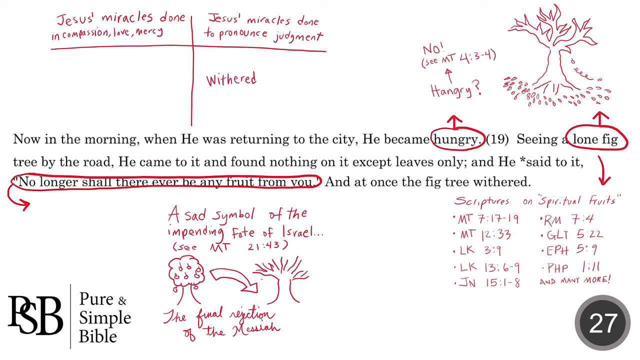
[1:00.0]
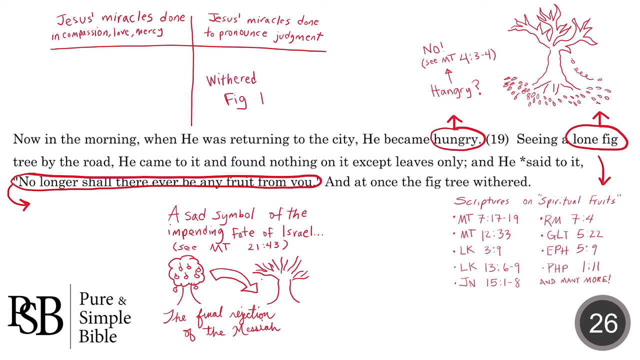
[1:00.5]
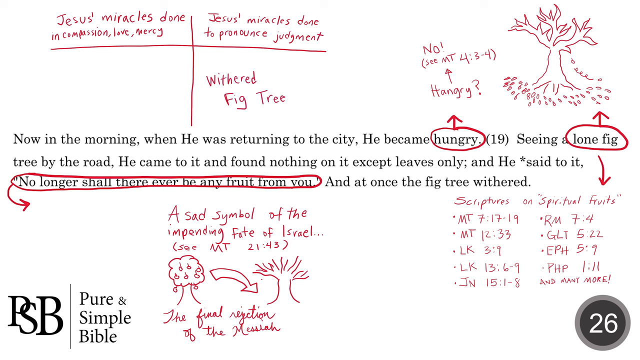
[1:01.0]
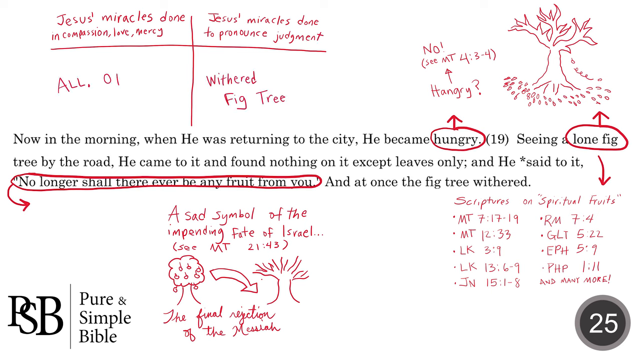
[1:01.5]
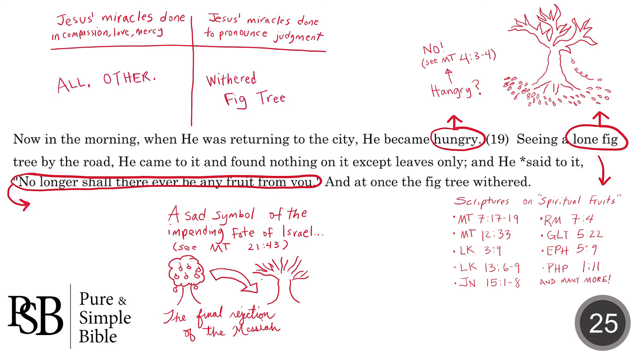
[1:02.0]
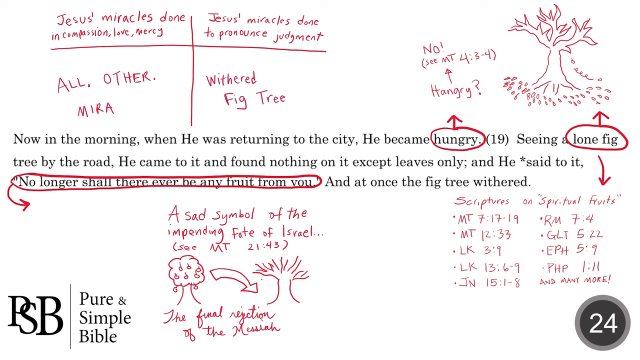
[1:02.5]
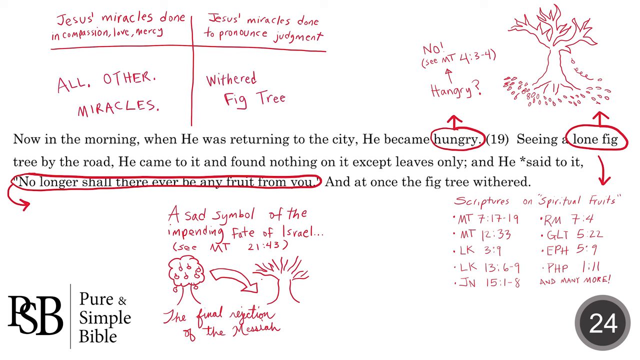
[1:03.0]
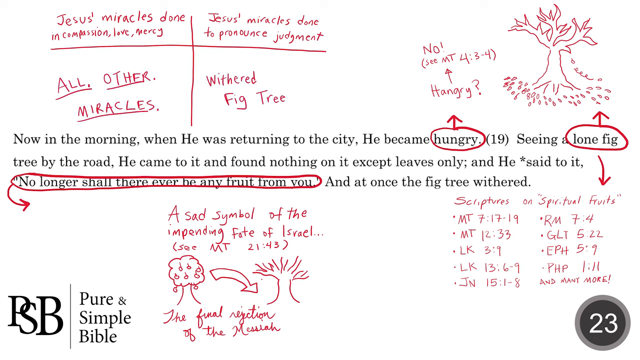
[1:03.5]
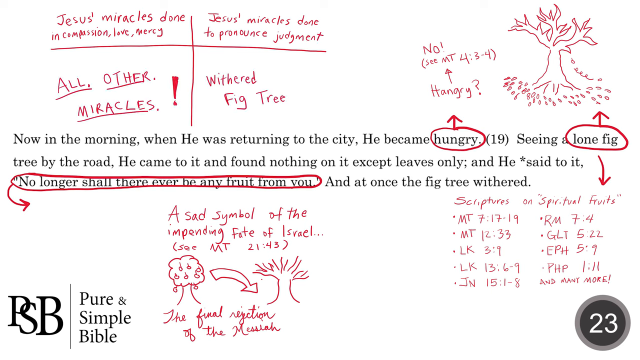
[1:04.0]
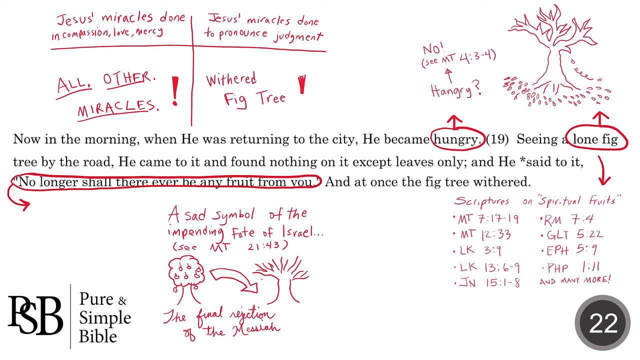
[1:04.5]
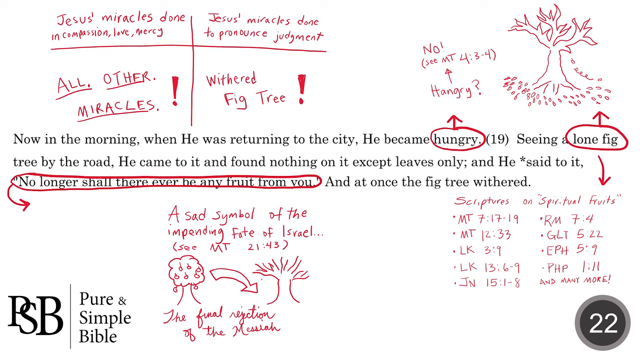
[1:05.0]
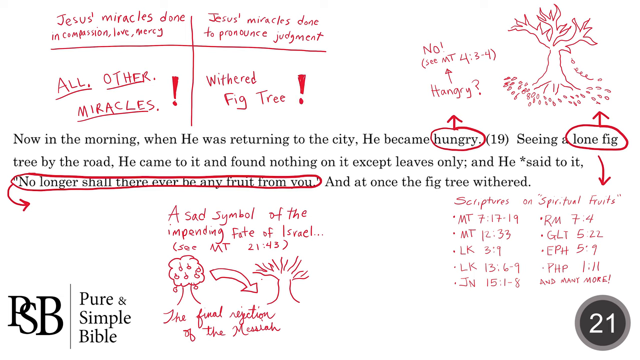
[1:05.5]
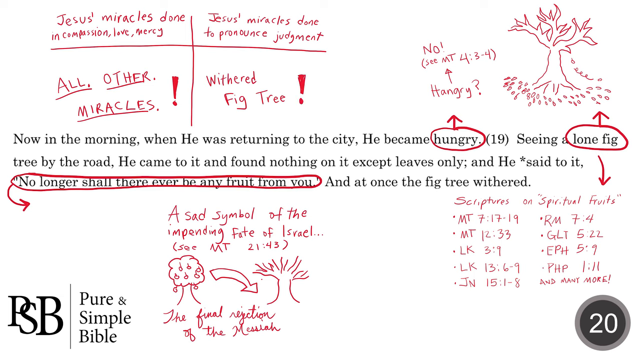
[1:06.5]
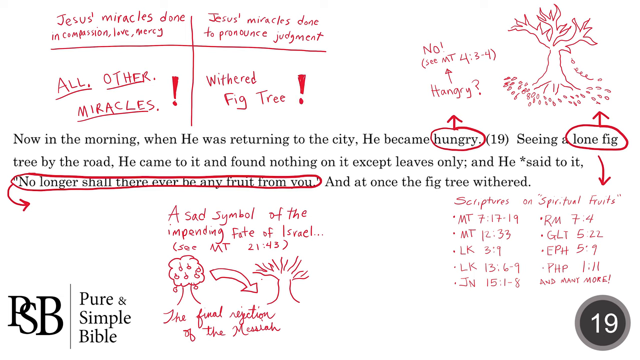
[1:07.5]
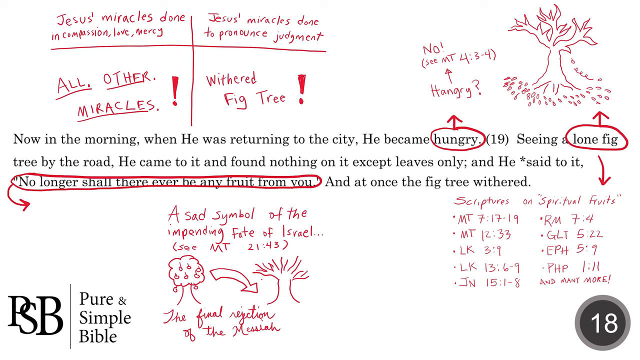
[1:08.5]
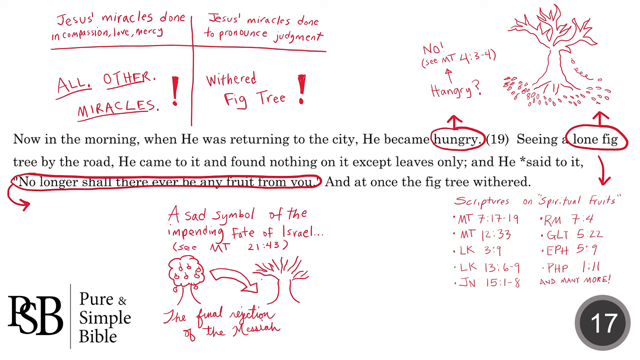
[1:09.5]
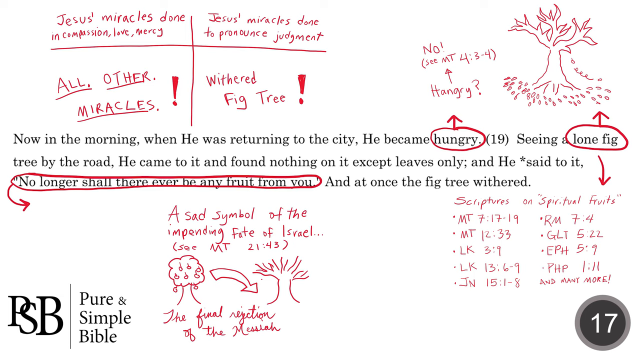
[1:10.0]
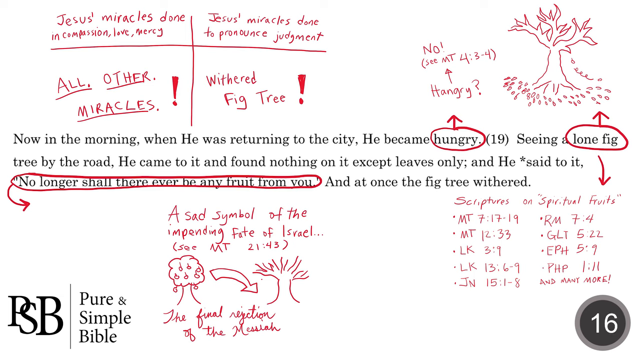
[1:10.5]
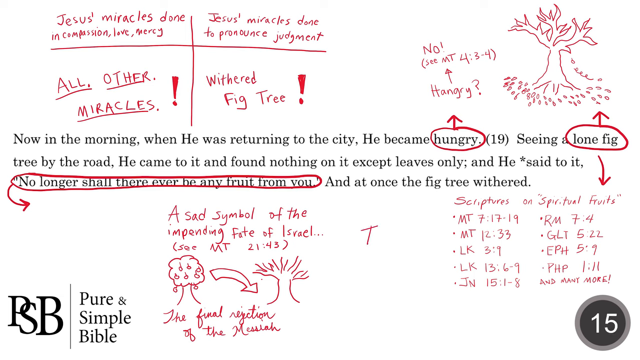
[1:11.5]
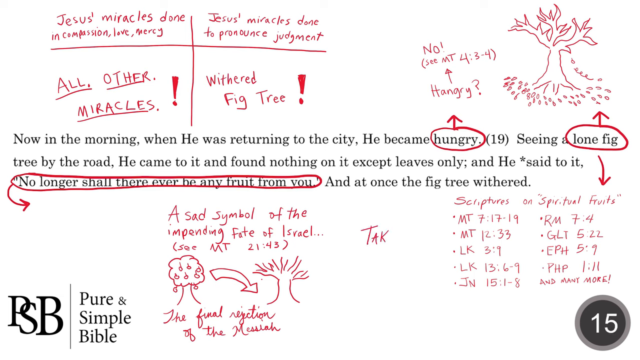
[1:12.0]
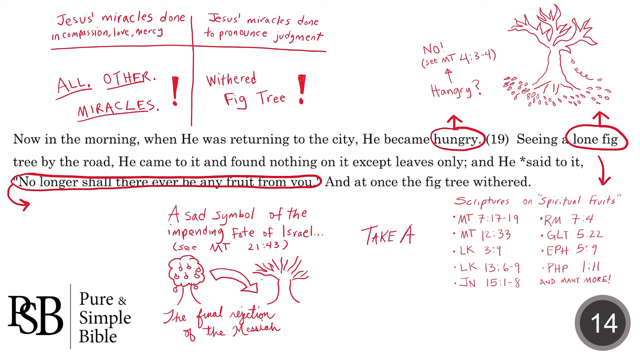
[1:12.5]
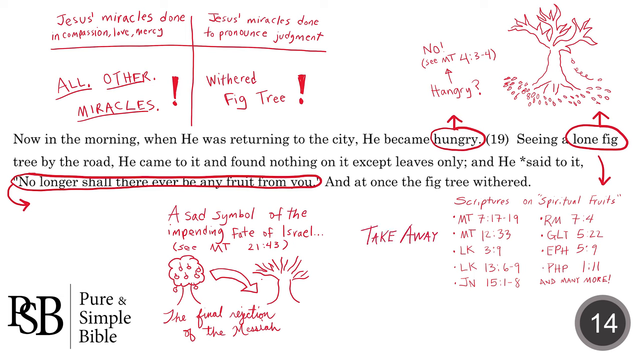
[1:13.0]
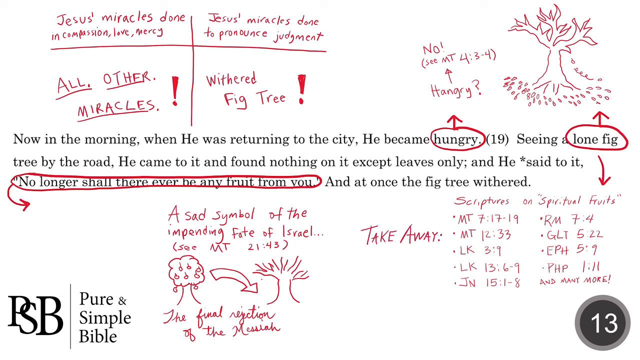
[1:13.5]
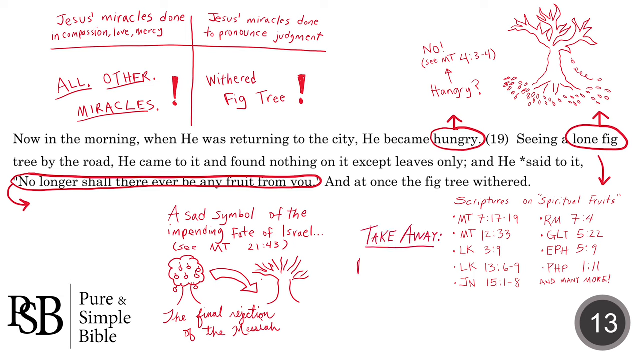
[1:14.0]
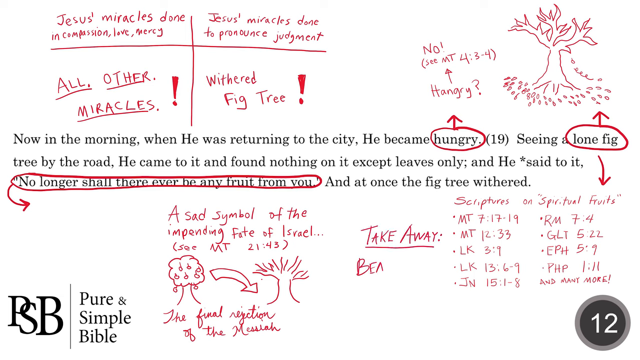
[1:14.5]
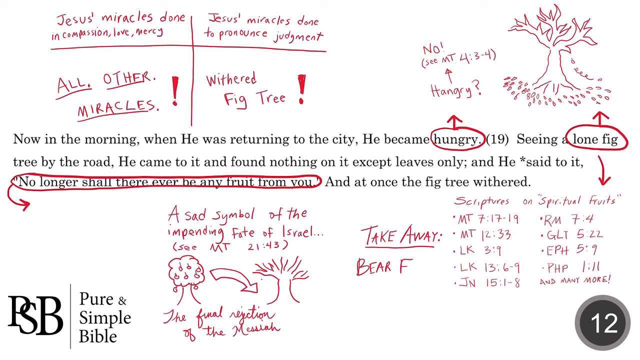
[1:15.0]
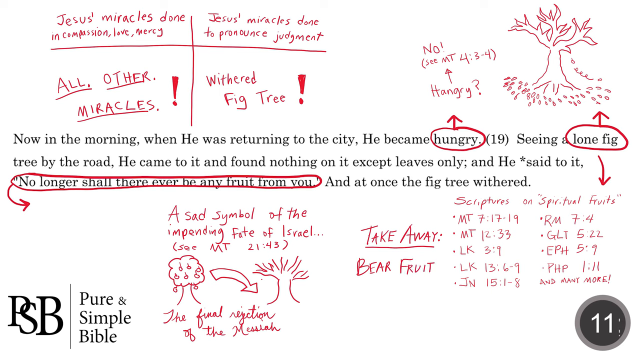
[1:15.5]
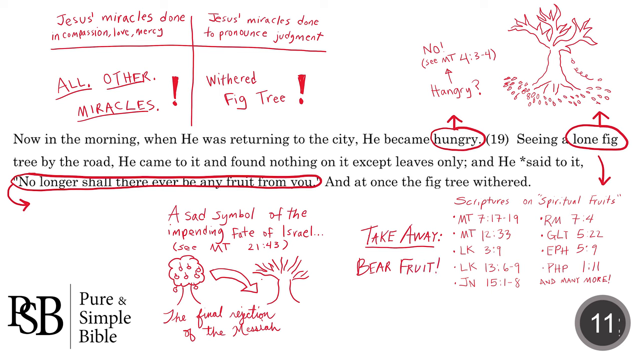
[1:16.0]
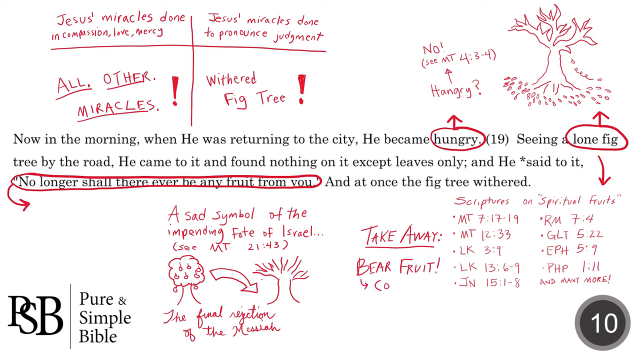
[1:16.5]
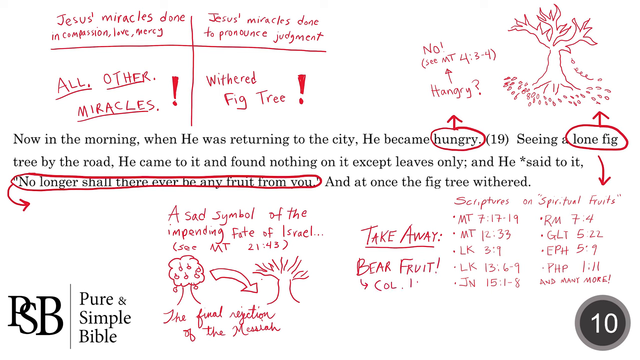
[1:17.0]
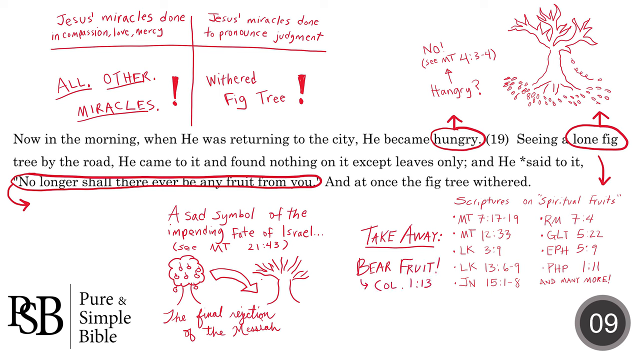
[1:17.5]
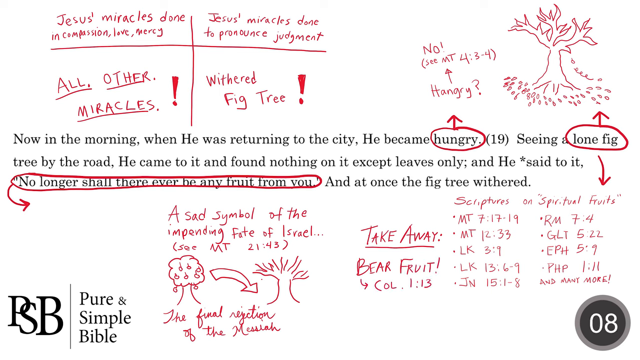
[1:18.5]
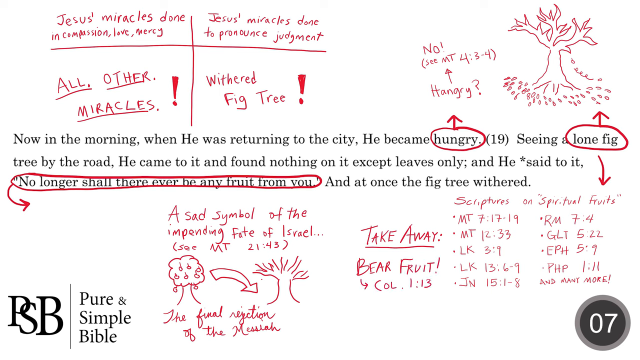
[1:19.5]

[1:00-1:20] The drawing shows a tree changing from having fruits or leaves to a tree with only branches and no leaves, and underneath it is written "the final rejection of the Messiah". Above the two trees is written "a sad symbol of the impending fate of Israel, see Matthew 21, 43". Two columns are then drawn, one on the left and one on the right. The left column is headed "Jesus' miracles done in compassion, love, mercy" and the right column "Jesus' miracles done to pronounce judgment". Under the left column is written "all other miracles" with an exclamation mark shaded in deep red; under the right column is written "withered fig tree", also shaded in deep red. Another note reads "take away, bear fruit" with the reference verse Colossians 1, 13. The timer in the bottom right corner keeps counting down.